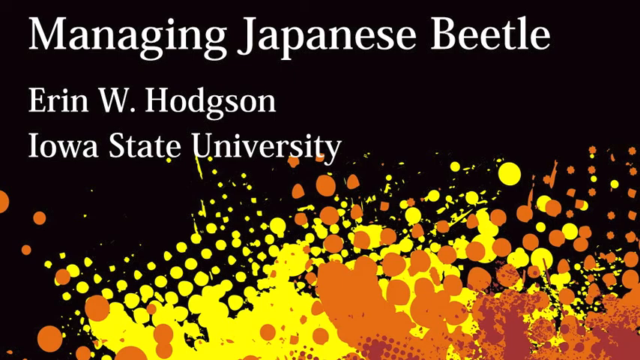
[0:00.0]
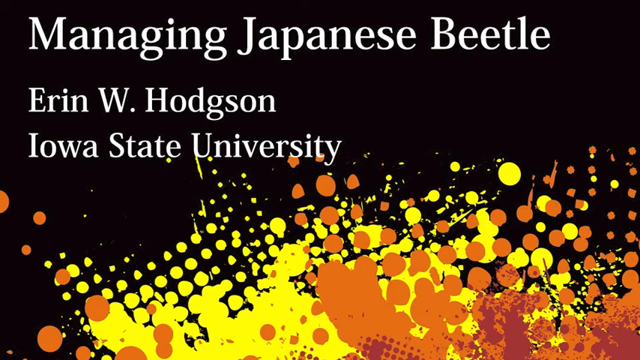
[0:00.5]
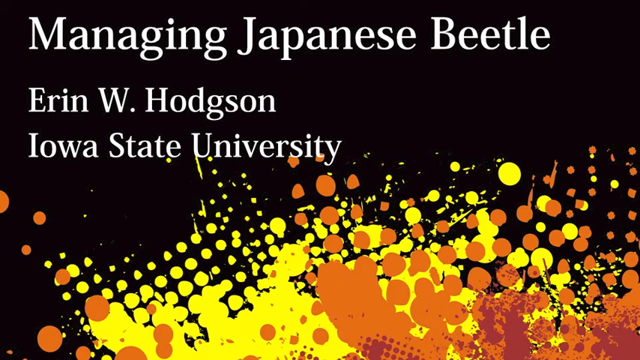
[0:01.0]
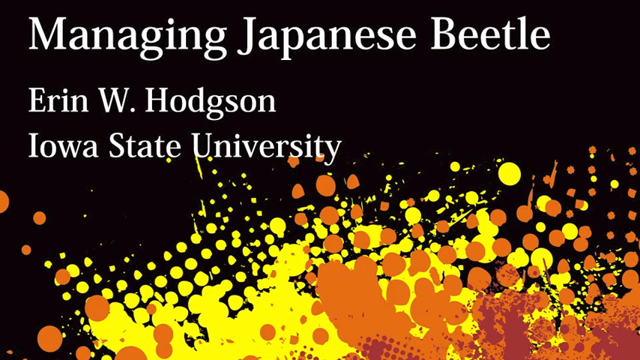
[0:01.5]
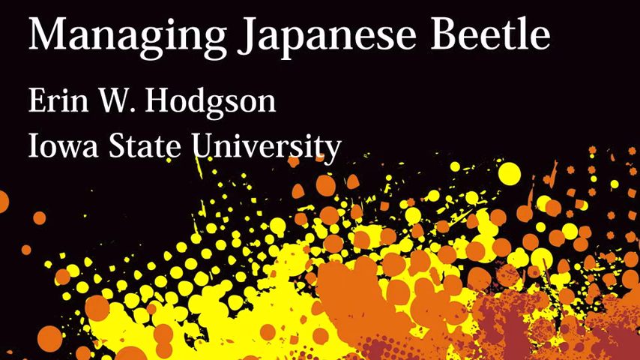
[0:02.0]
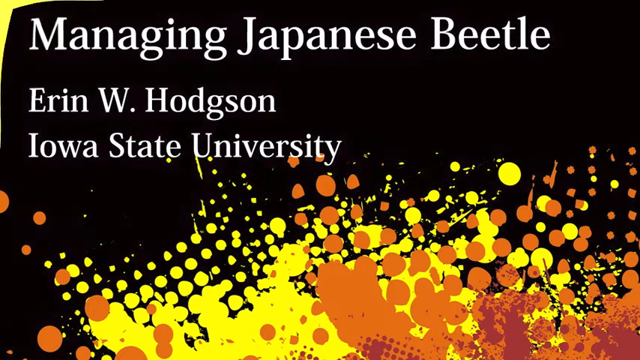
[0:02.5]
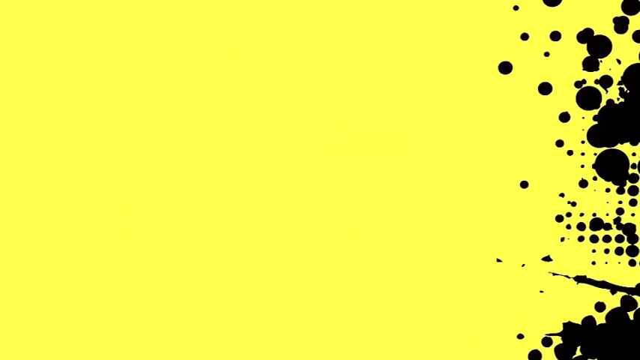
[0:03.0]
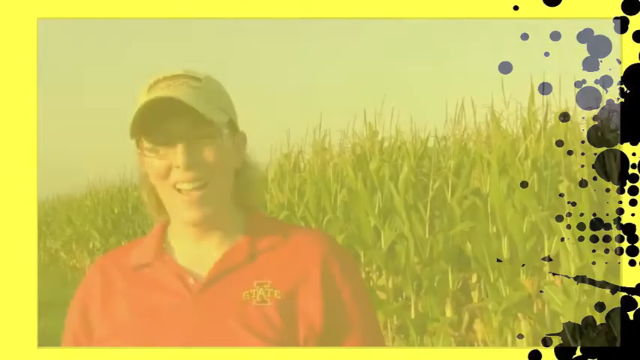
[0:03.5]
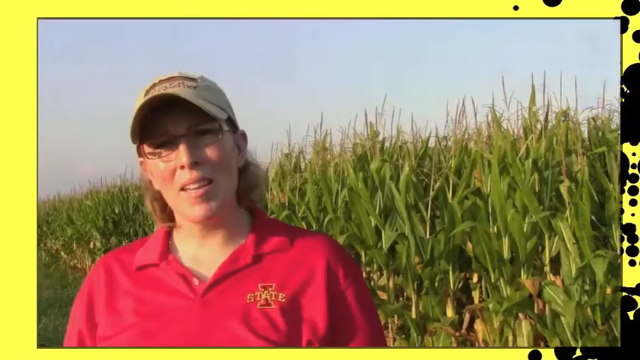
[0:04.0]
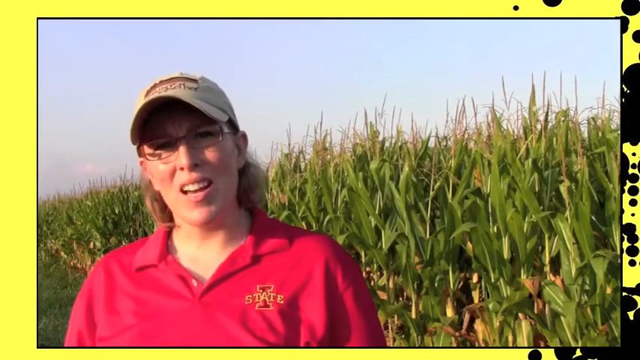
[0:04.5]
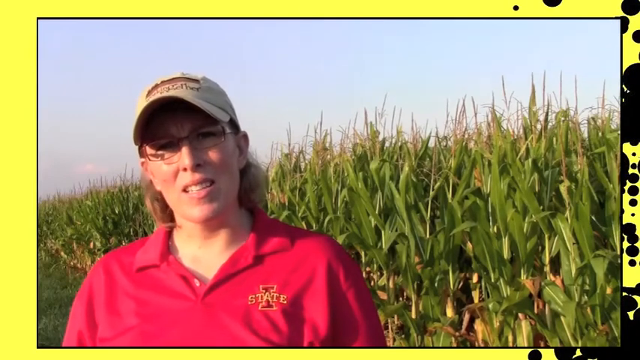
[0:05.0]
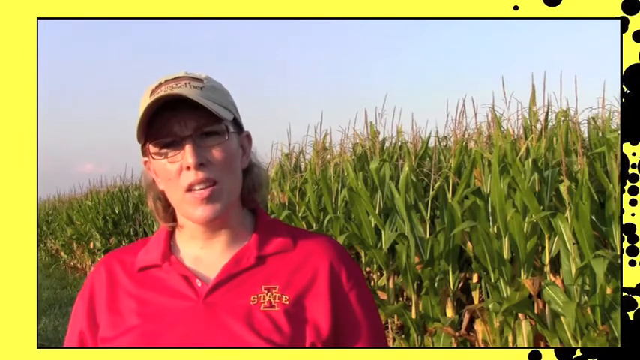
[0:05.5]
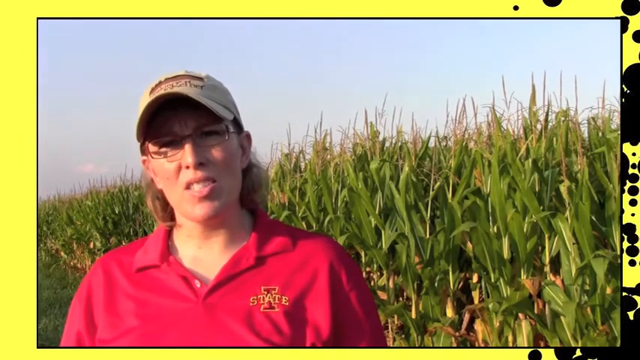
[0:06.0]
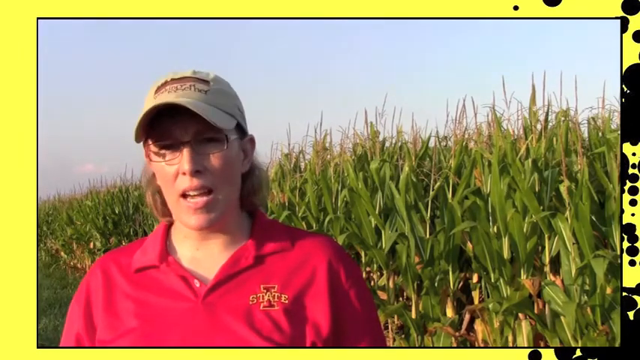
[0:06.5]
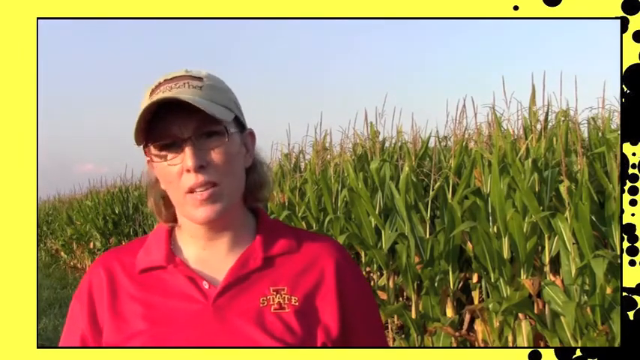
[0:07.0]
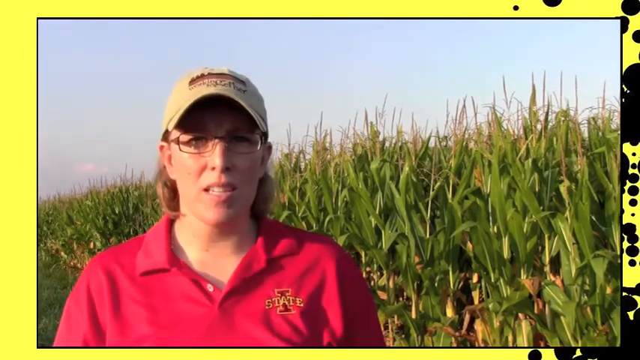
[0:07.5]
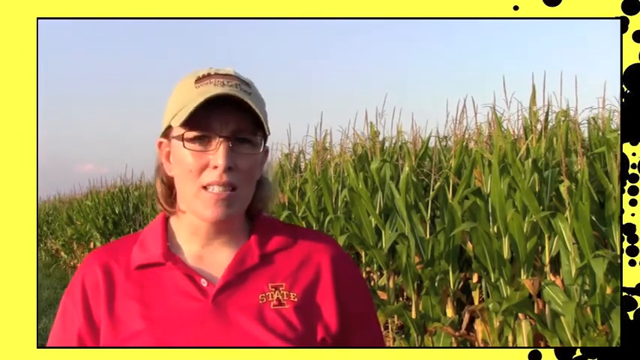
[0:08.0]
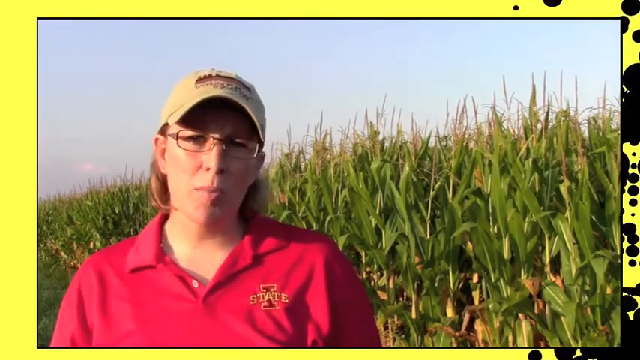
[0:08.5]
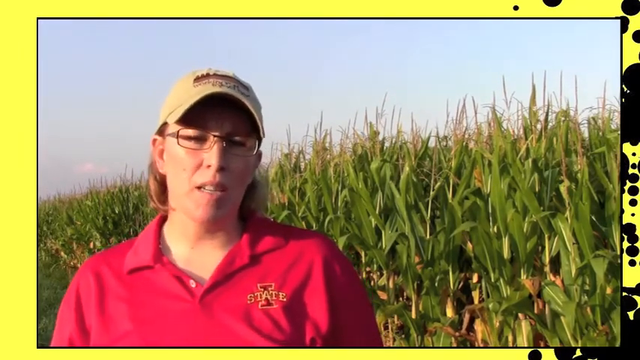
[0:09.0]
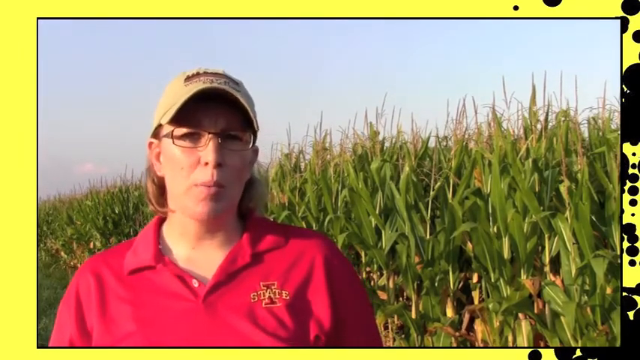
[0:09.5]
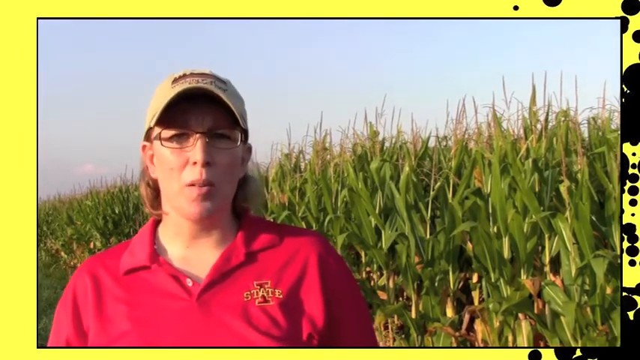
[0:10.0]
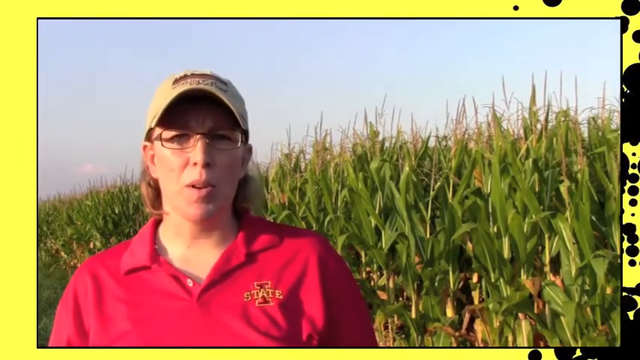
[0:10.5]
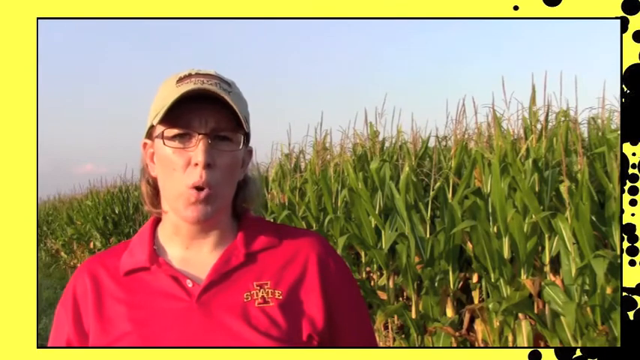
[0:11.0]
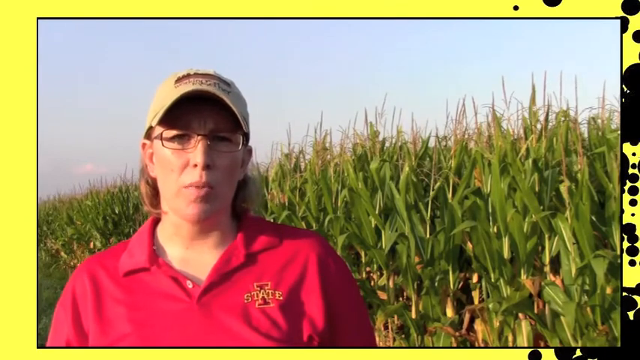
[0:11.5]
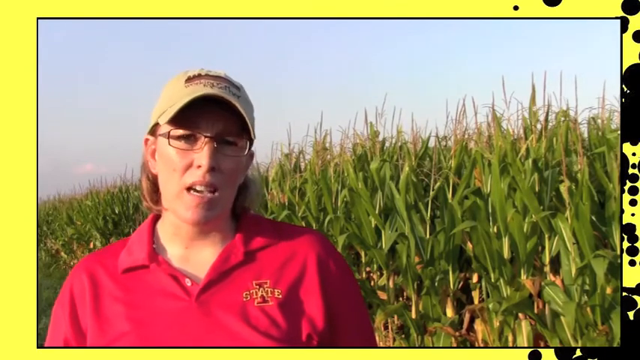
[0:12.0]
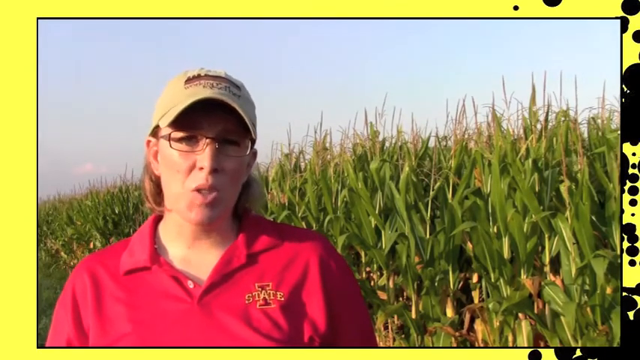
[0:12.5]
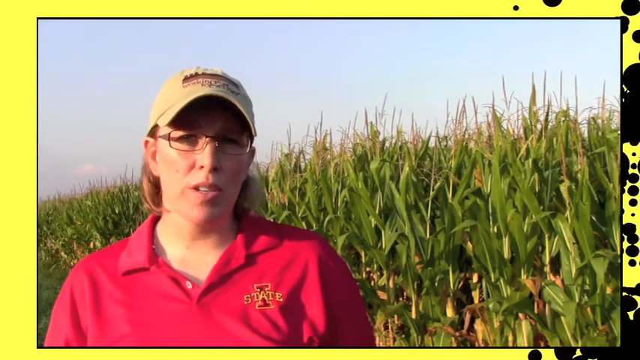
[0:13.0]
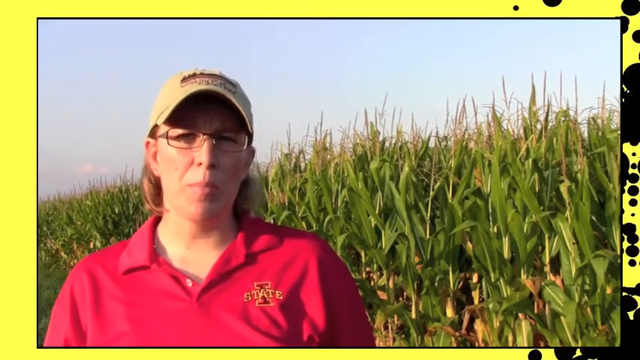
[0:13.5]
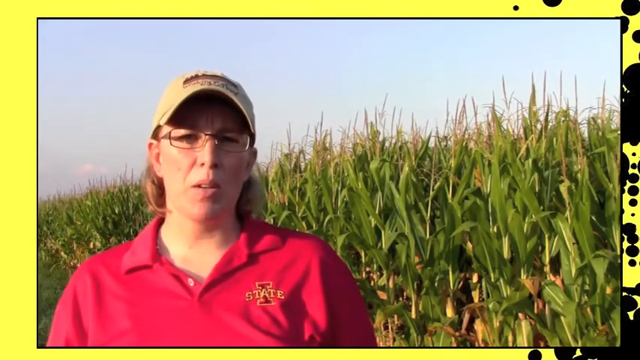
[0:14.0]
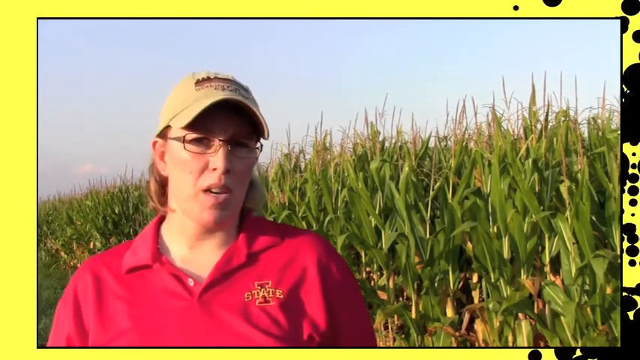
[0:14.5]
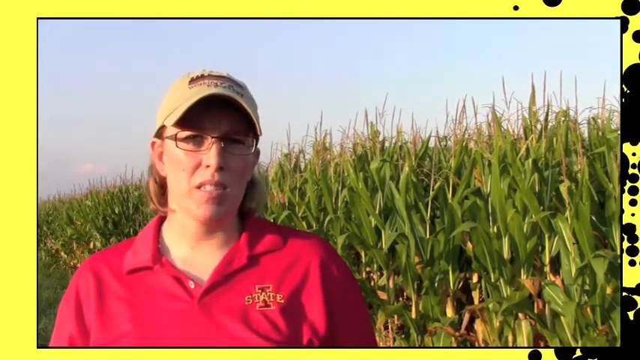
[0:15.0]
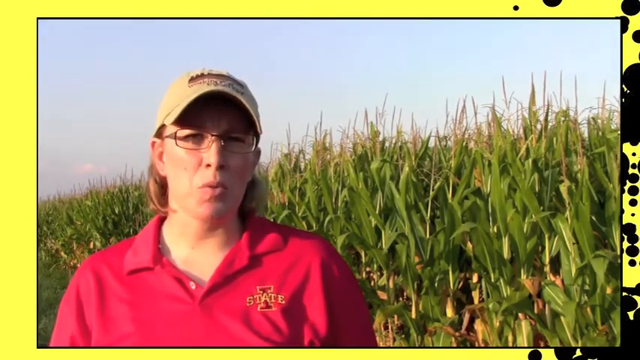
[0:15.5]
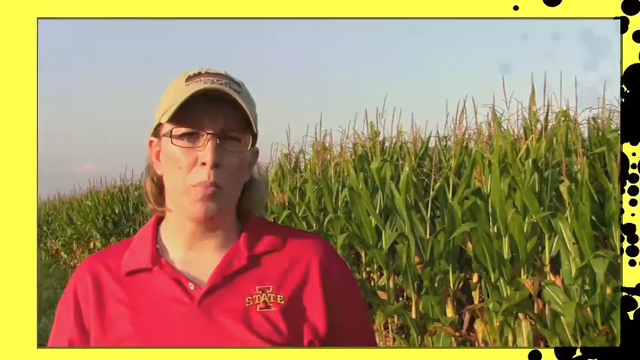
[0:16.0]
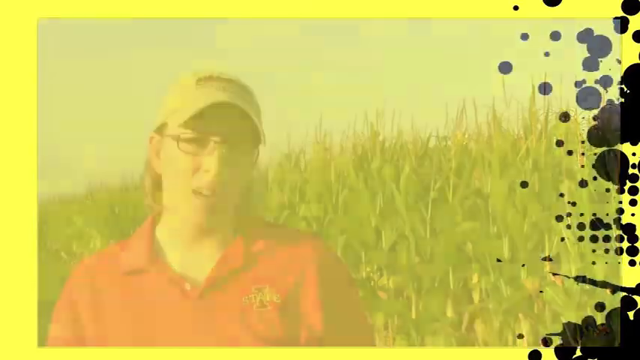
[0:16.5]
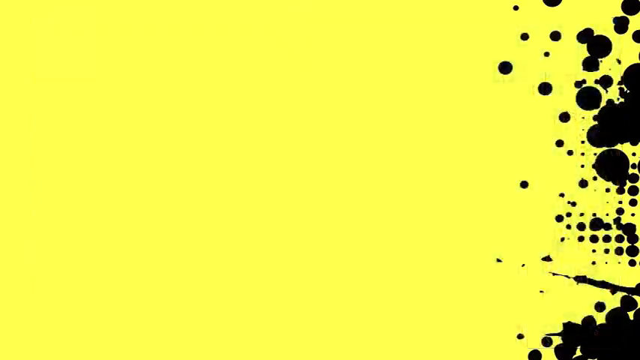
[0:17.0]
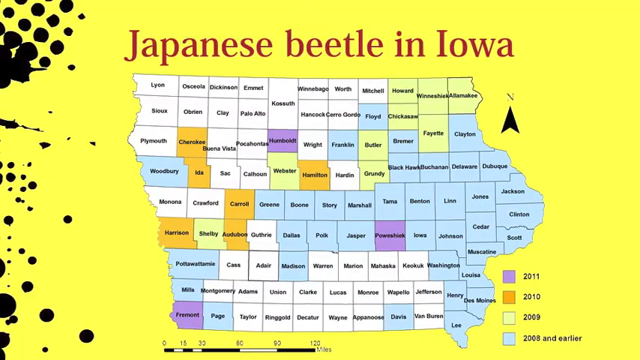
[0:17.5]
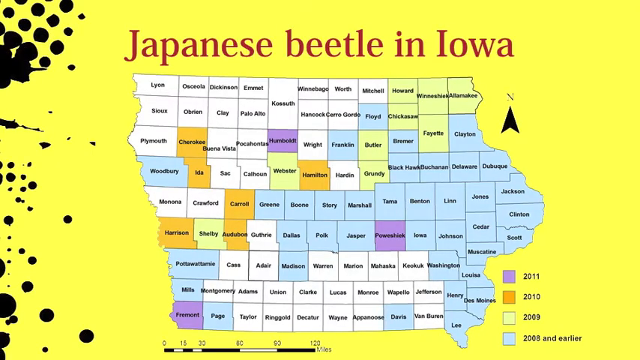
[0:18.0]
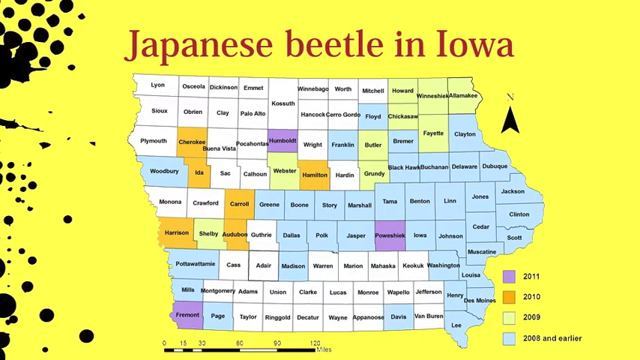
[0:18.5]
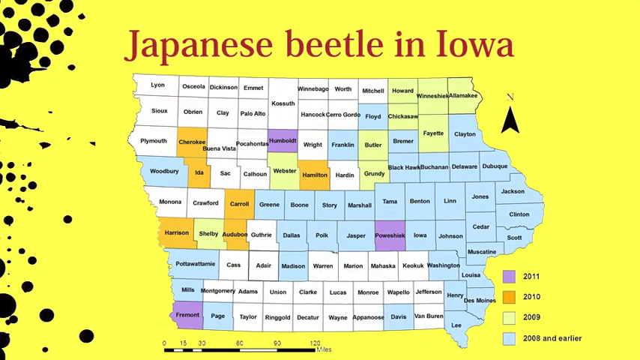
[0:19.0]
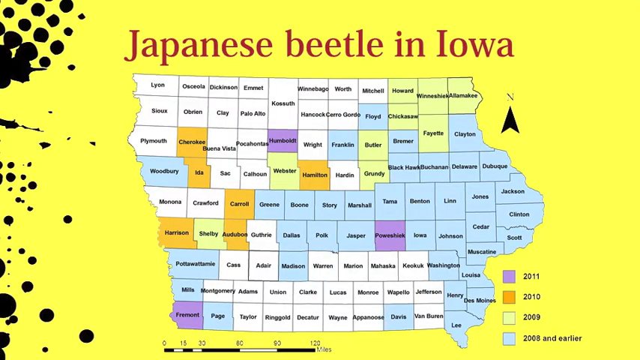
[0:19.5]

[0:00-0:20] The video opens with a title reading "Managing Japanese Beetle Erin W. Hodgson, Iowa State University." Below it is what looks like splattered yellow and orange paint on a black background. A woman stands in a cornfield, with the cornfield behind her. She wears a red shirt that says "Iowa State" on the left side and a hat, and she has shorter brown hair and glasses. The image then changes to a map of Iowa with many different areas sectioned off, and "Japanese Beetle in Iowa" at the top on a yellow background. The sections on the map show different names and are colored differently, with the colors associated with years: blue with 2011, orange with 2010, green with 2009, and blue with 2008 and less.